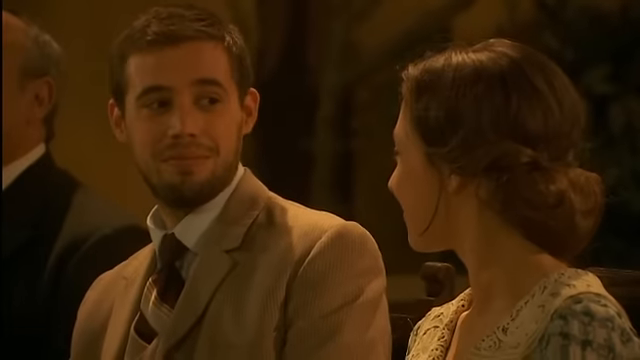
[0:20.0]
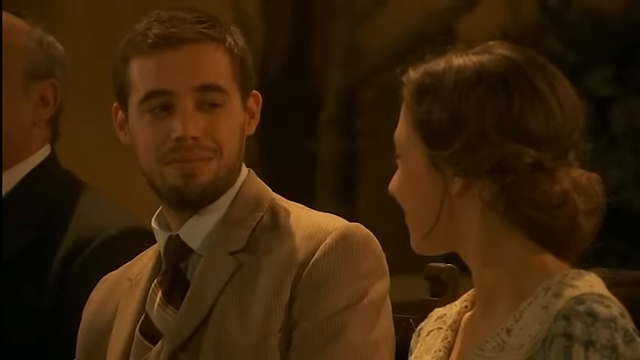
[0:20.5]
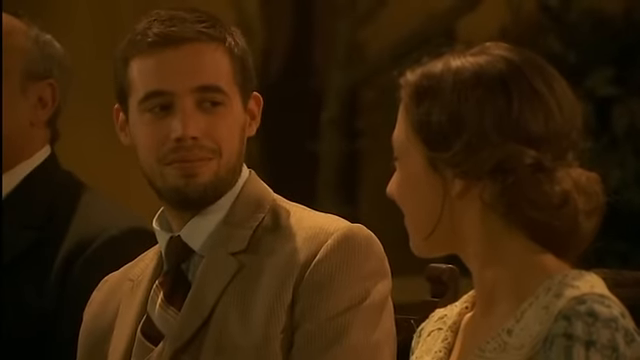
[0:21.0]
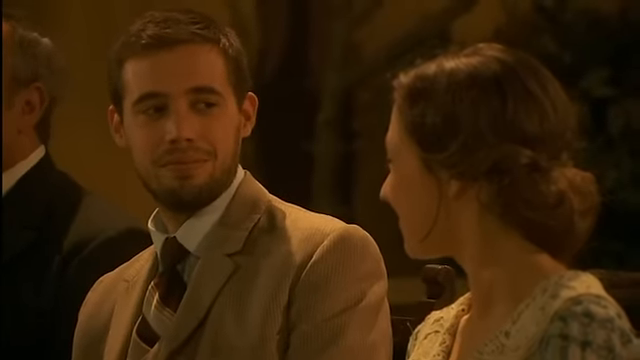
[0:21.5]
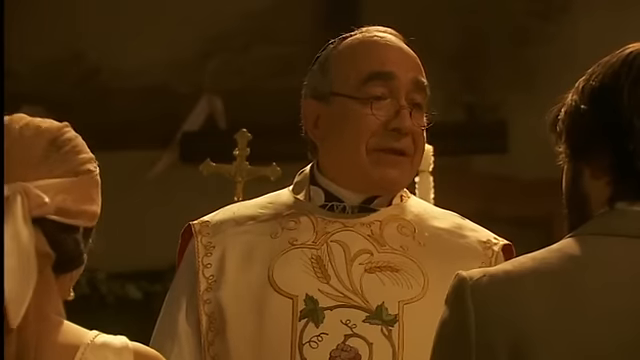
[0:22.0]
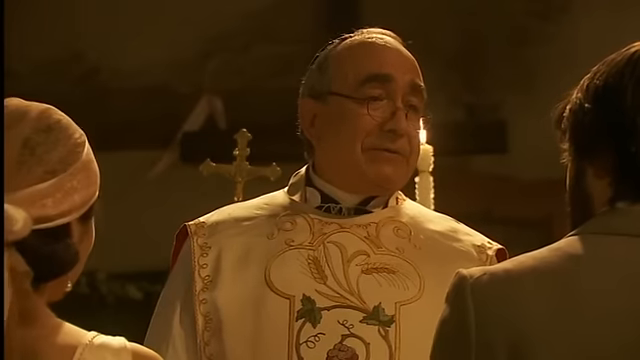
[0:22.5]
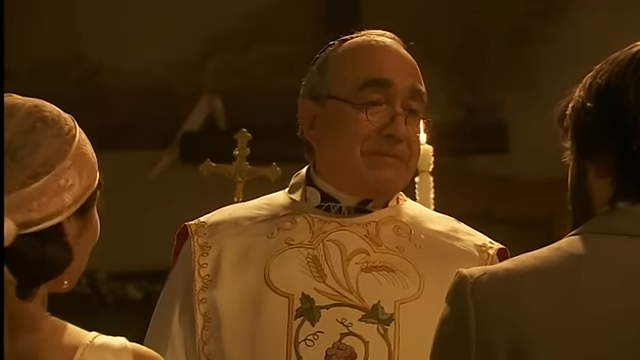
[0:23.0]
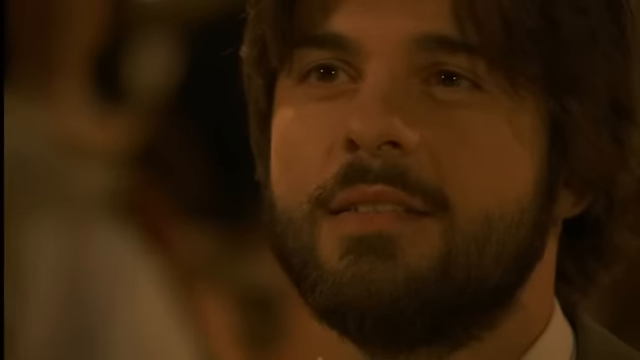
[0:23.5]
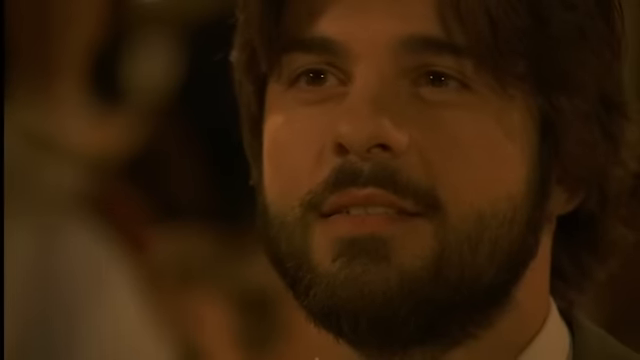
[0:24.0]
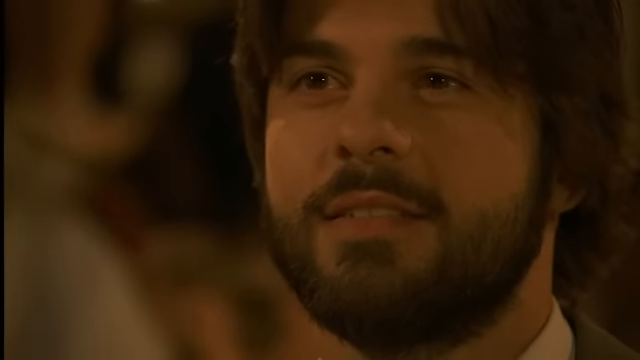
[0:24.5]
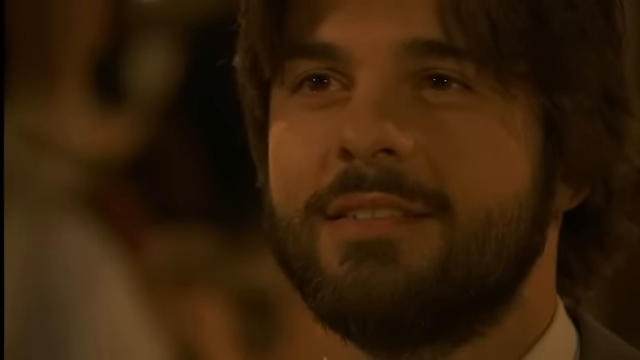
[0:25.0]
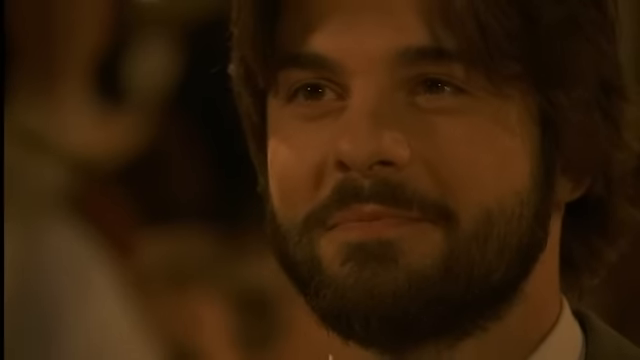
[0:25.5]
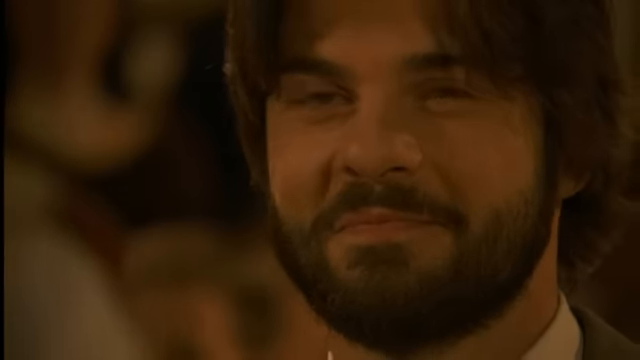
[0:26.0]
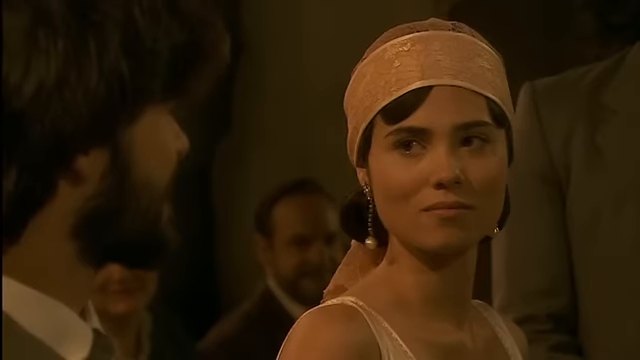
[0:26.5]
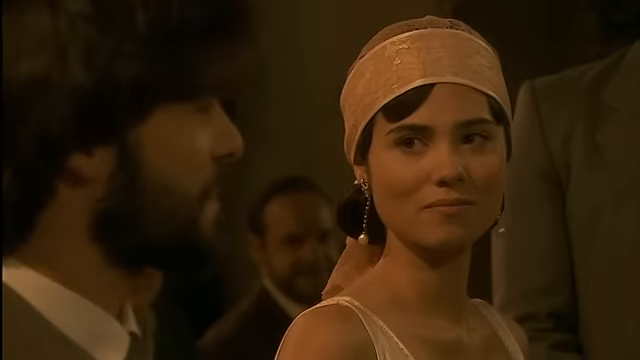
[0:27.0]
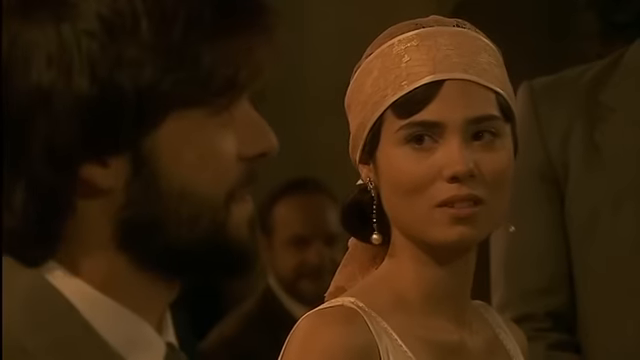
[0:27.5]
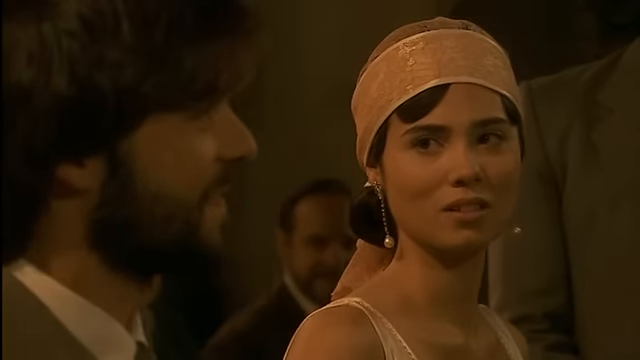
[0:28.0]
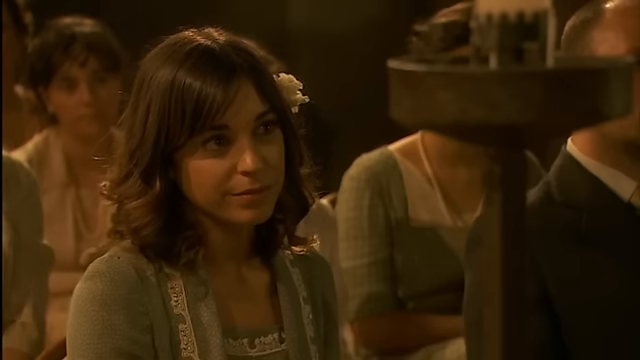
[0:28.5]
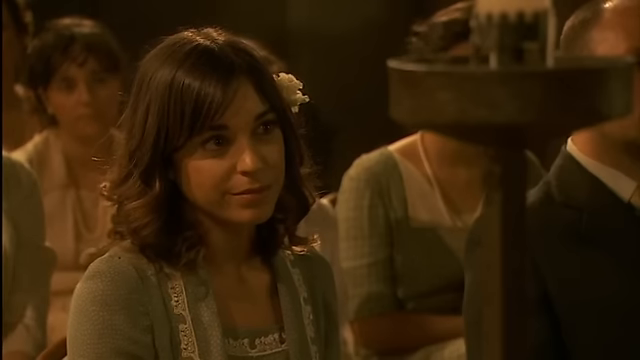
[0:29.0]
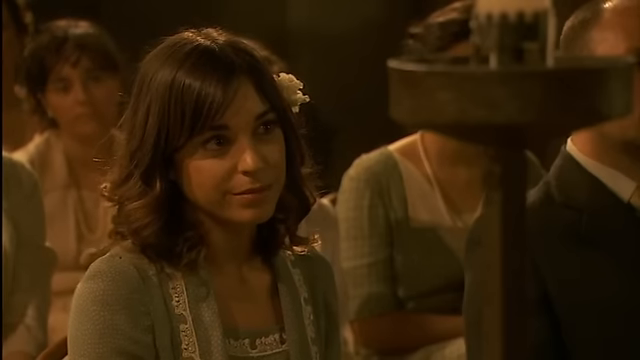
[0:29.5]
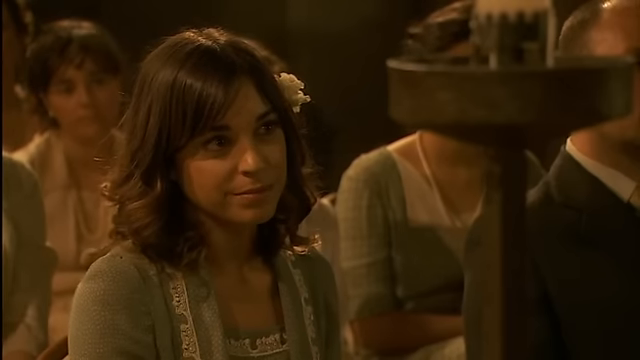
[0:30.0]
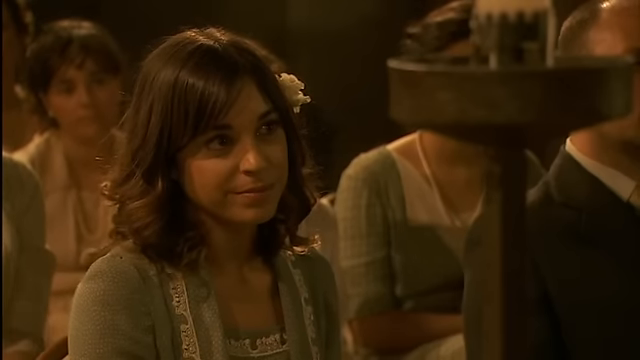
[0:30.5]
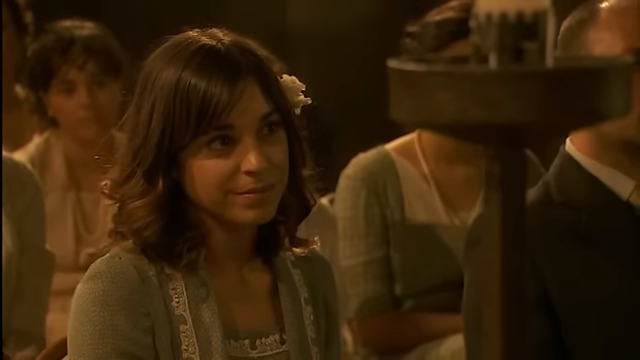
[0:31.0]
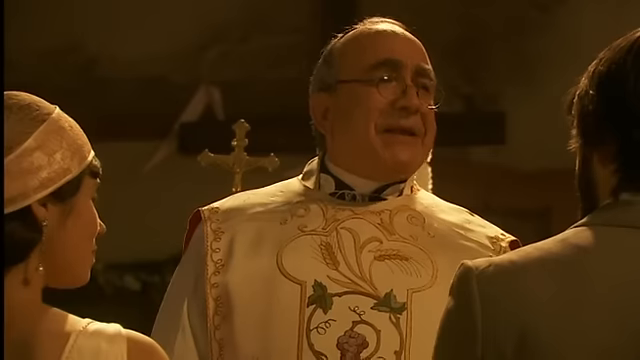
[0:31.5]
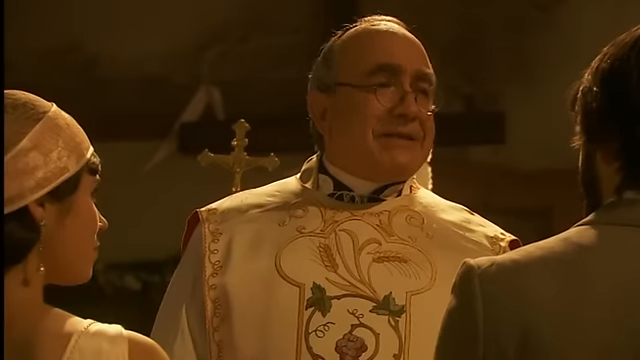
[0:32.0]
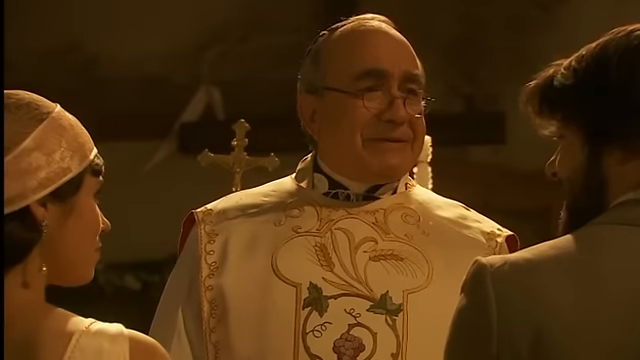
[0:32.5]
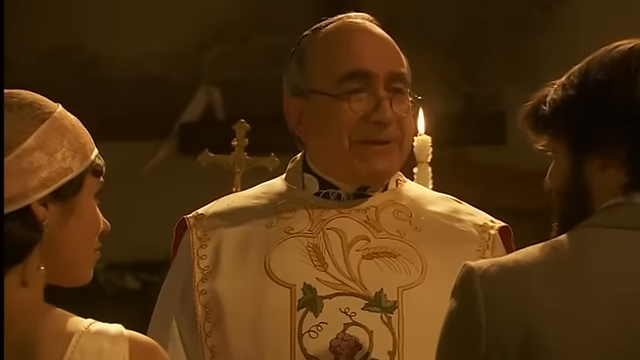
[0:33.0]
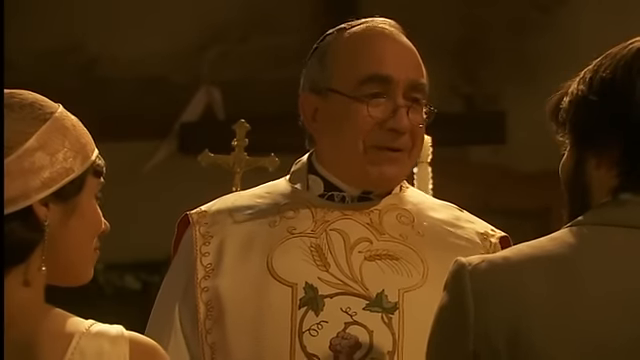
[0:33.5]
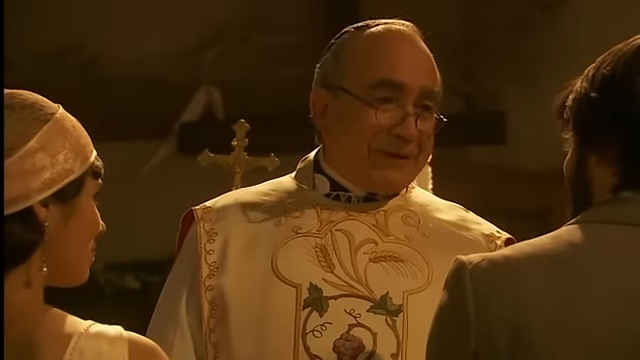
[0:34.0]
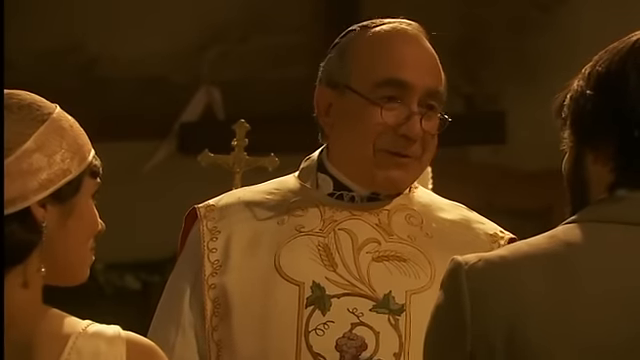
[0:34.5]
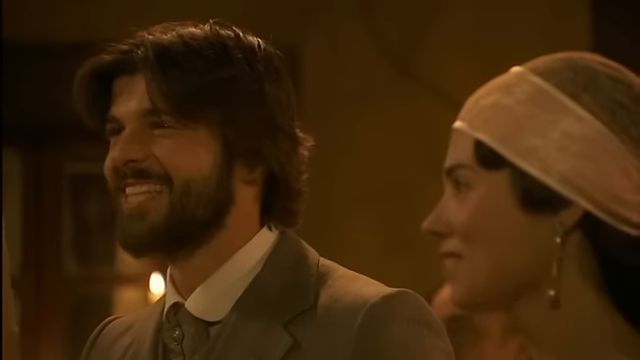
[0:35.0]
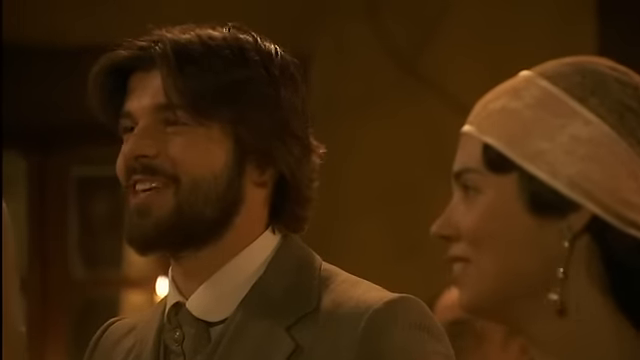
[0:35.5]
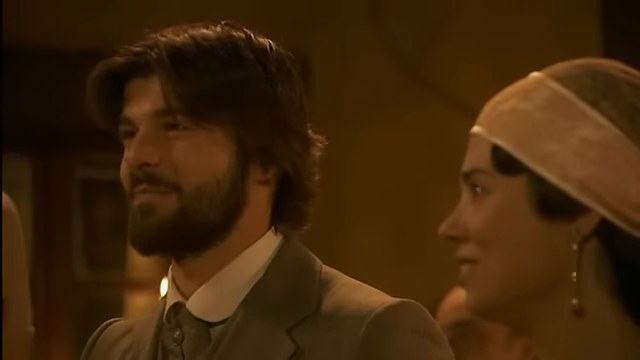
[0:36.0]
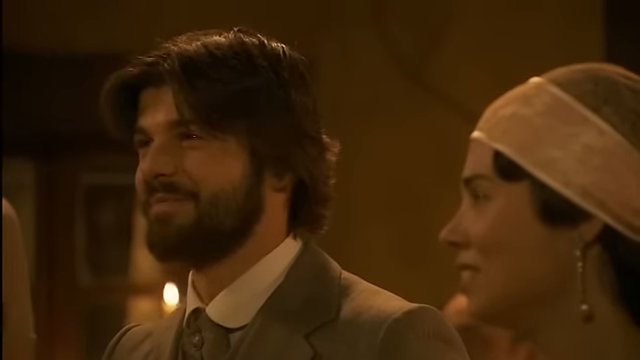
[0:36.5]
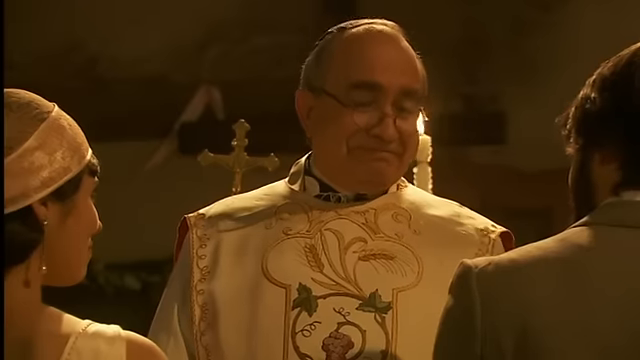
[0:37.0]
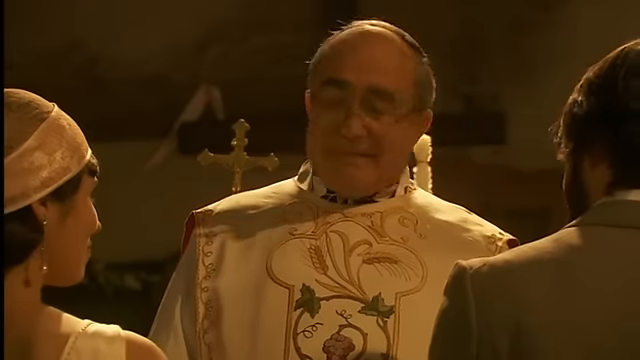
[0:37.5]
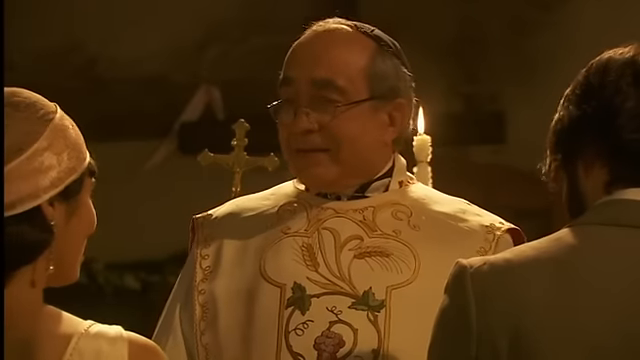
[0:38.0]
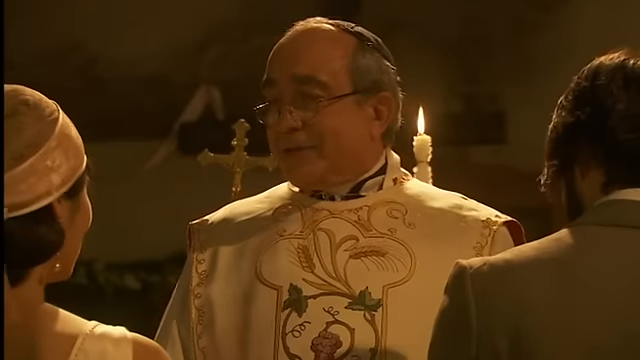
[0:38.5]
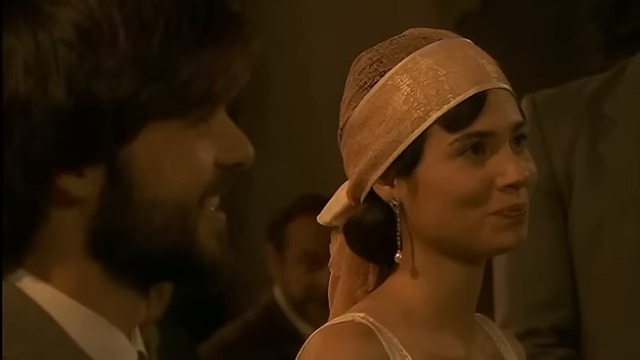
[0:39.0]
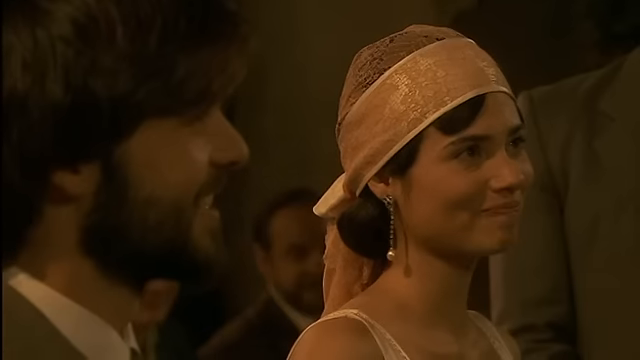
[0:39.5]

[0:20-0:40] The younger man and the lady in the back of the congregation look lovingly at one another. She has her hair down in a low bun, and he winks at her. The shot goes back to the priest talking to the two people in front of him, then closes up on the male's face; he looks like he has a beard and mustache, and the priest seems to be asking him if he takes this lady to be his lawfully wedded wife. She looks to be dressed in a flapper or Gilded Age style, with long hair, pearl earrings and a slip pink dress. The shot goes to a lady in the crowd with a short brunette haircut and a white flower sticking off the right side of her ear. It returns to the priest, in rimmed glasses and a robe, speaking to the gentleman in front of him, who keeps looking at the lady to his left. The priest then looks over at the lady and seems to start asking her the same question, and she gives a half-hearted smile as he begins to talk to her.